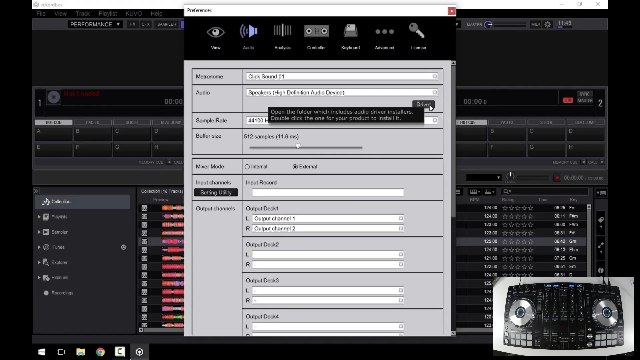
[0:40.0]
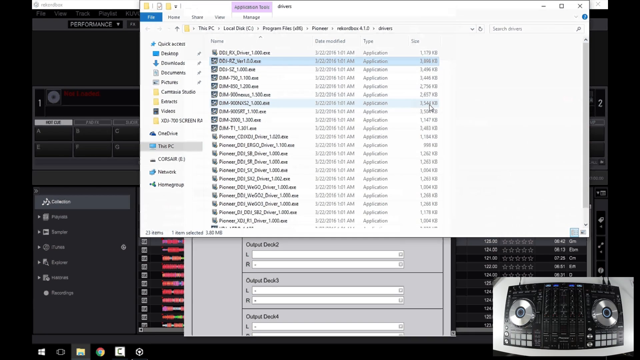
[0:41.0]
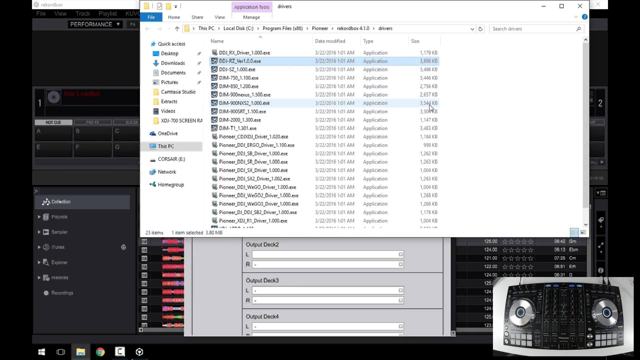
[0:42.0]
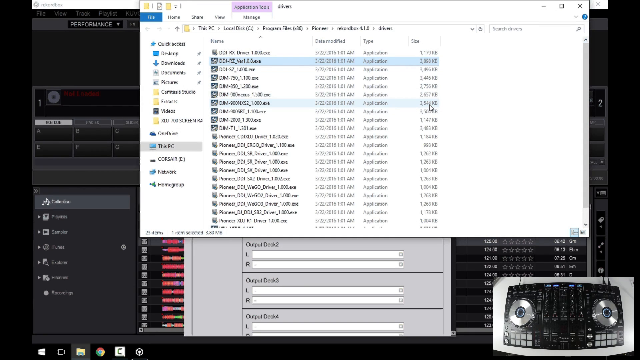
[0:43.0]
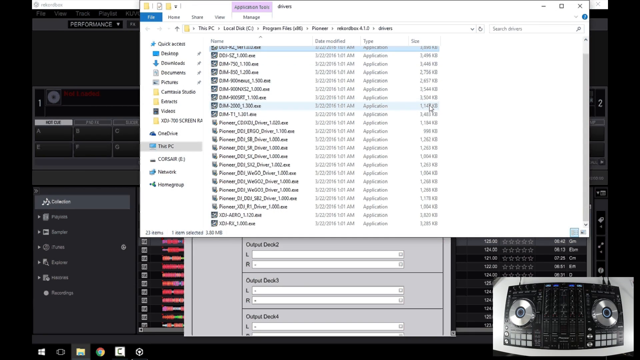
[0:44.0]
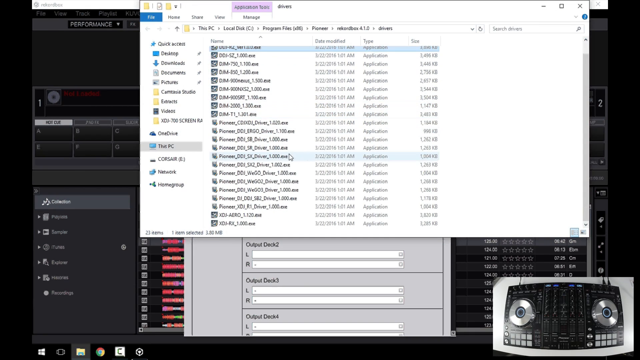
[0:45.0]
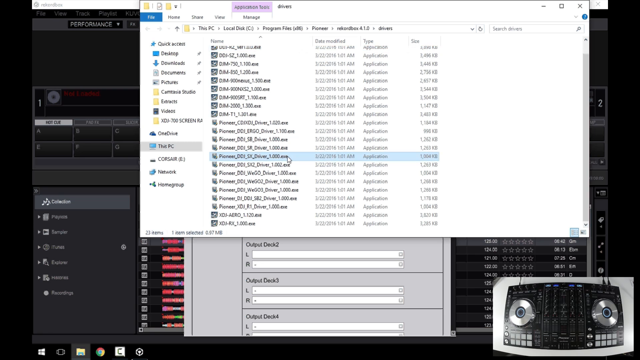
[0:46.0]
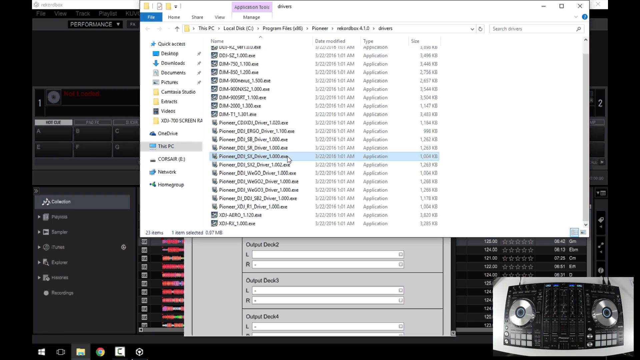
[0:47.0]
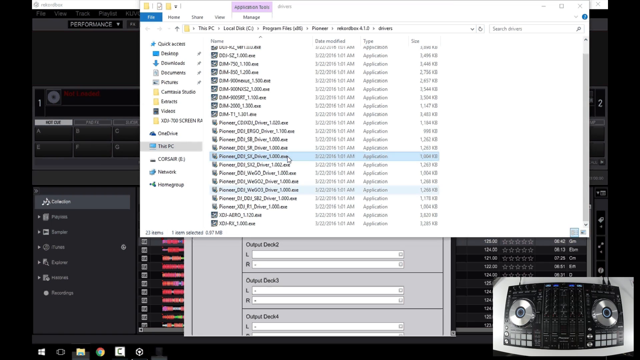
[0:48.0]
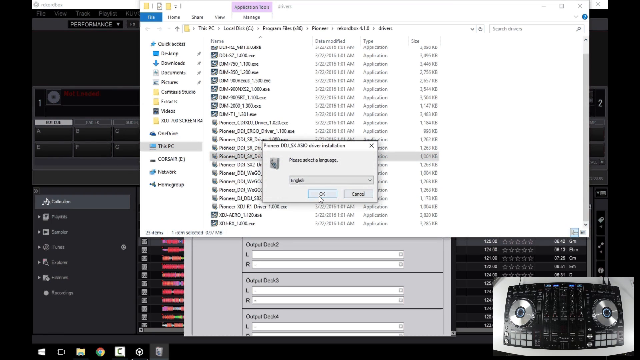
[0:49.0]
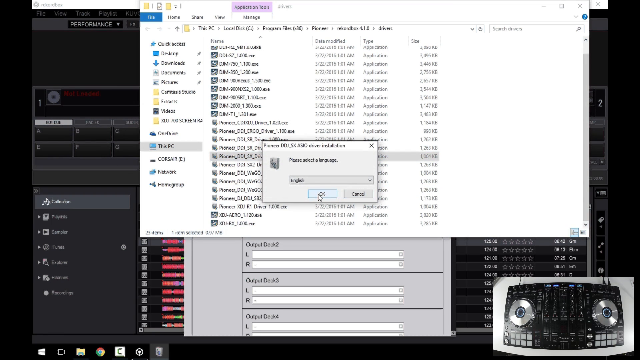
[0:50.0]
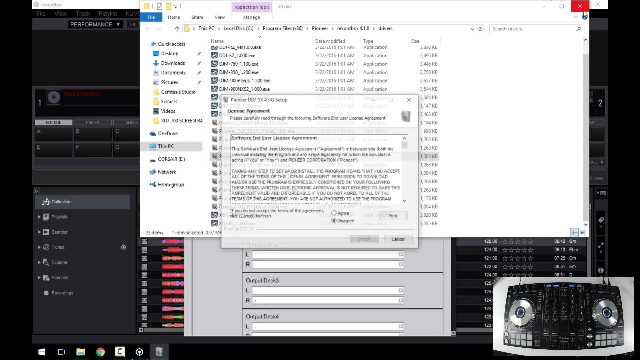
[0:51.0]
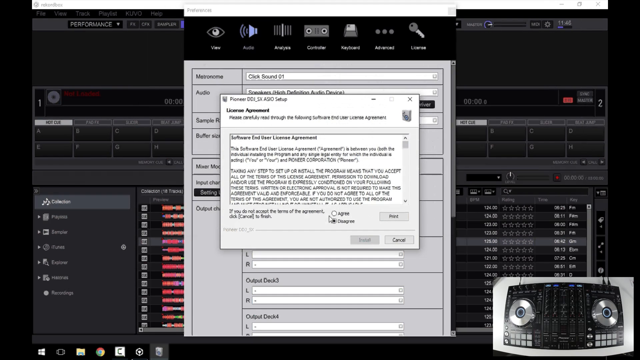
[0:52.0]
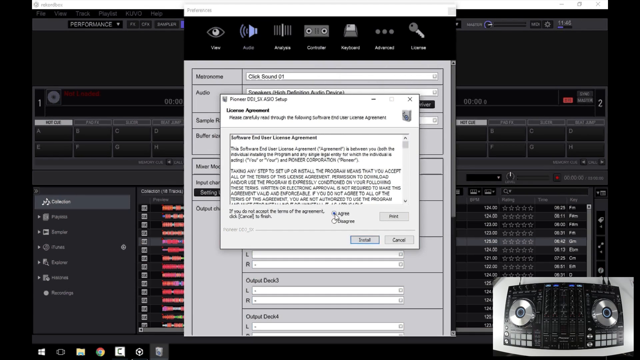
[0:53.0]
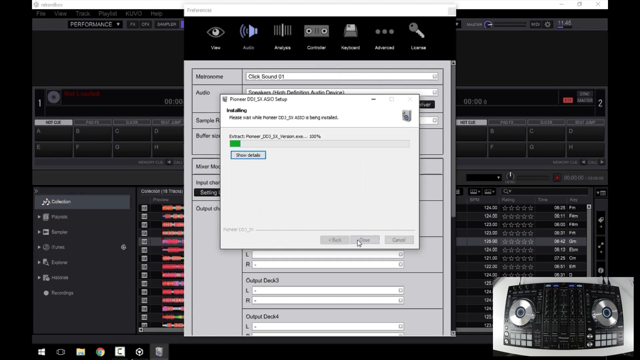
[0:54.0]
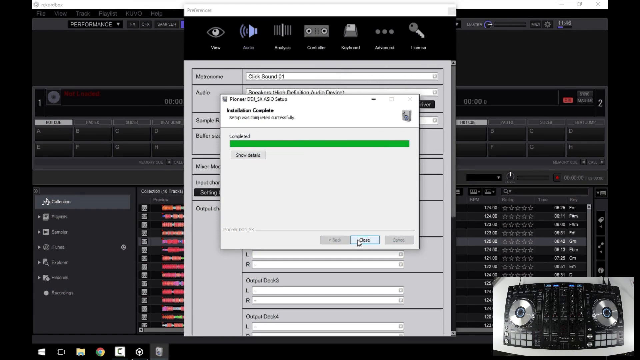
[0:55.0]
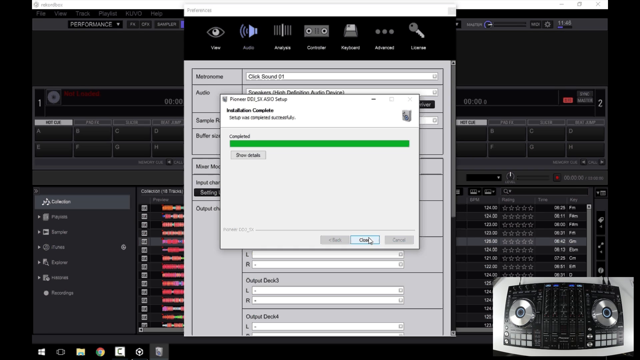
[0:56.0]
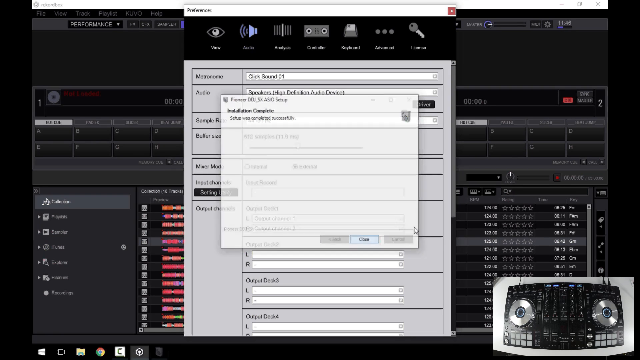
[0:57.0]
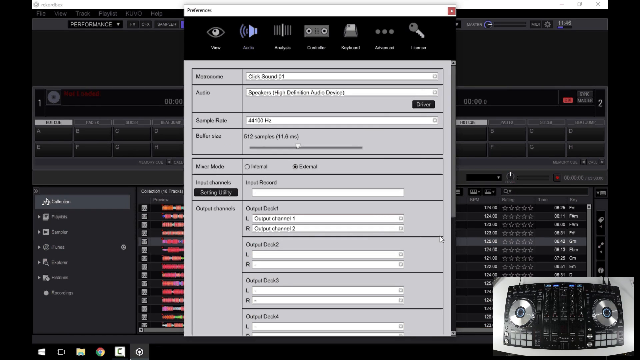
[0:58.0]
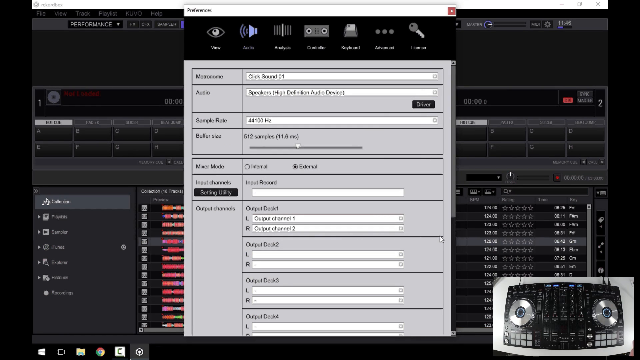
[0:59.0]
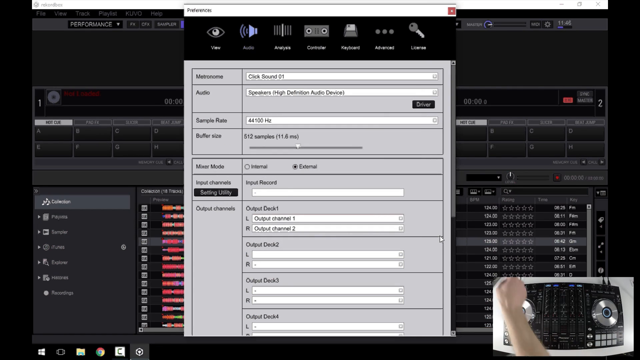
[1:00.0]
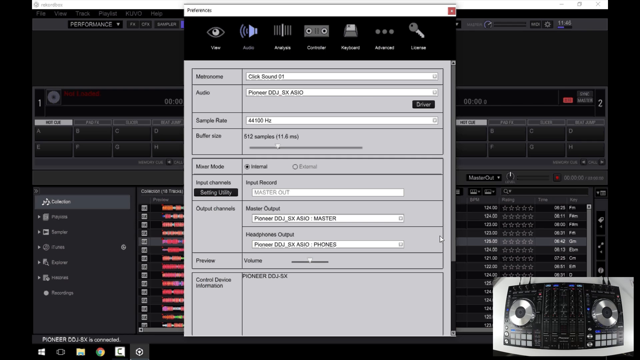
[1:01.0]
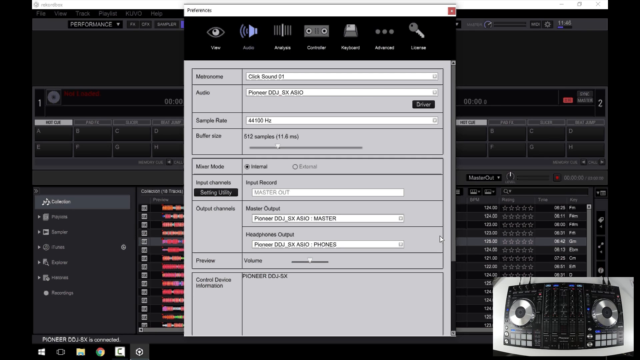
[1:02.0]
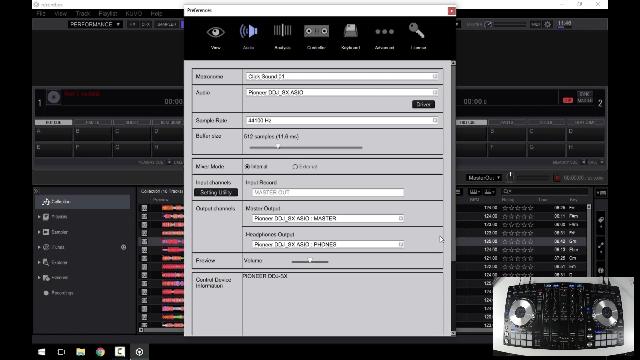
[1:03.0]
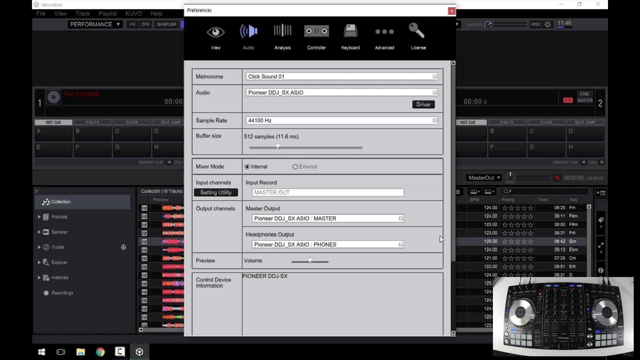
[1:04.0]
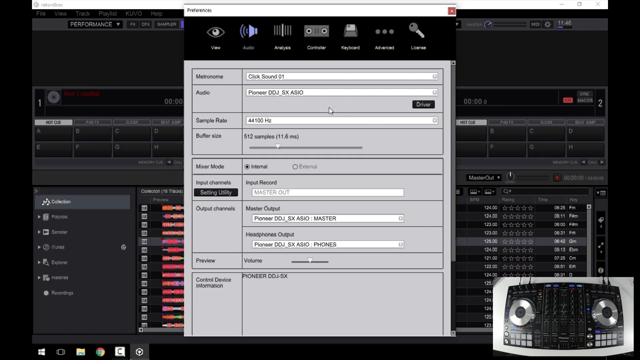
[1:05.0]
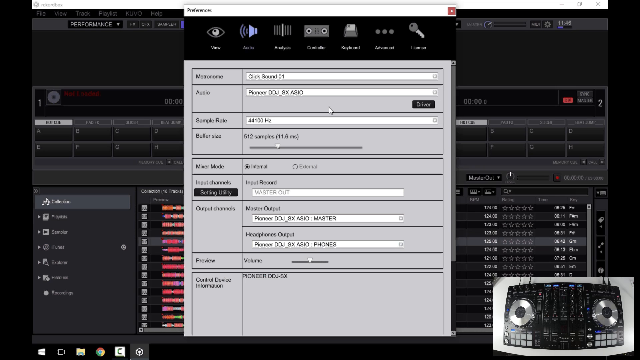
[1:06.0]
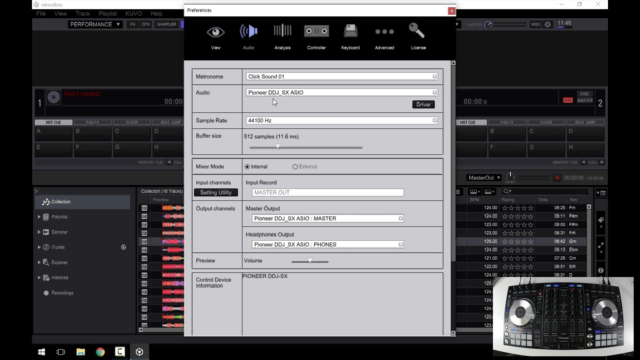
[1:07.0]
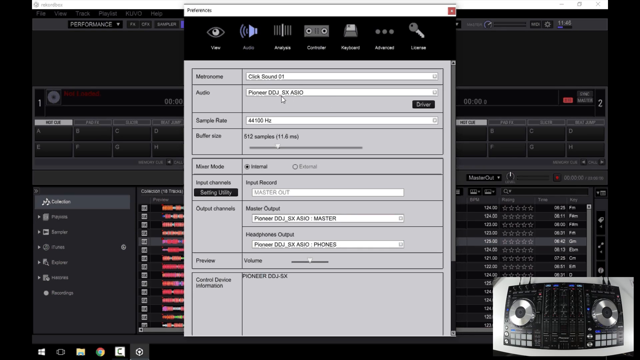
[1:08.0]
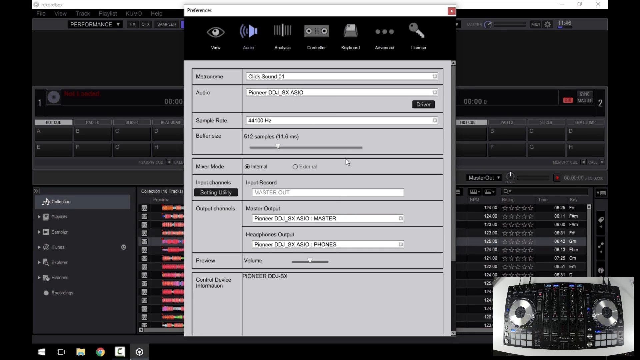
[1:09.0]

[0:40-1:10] The settings overlay remains as the user navigates through it, and another screen comes up: a document window from a Windows operating system. It takes up about half the screen in the top right-hand corner, leaving an L shape to the left showing the main Pioneer desk screen. The user goes through different programs and comes to a Pioneer item, which apparently has saved programs and maybe saved beats. He selects the language English and checks agree on the user agreement, and it looks like he is downloading some programs to use with the mixer. After the download, he goes to audio and Pioneer, then down to output channels, and clicks on one of the output channels drop-down menus.